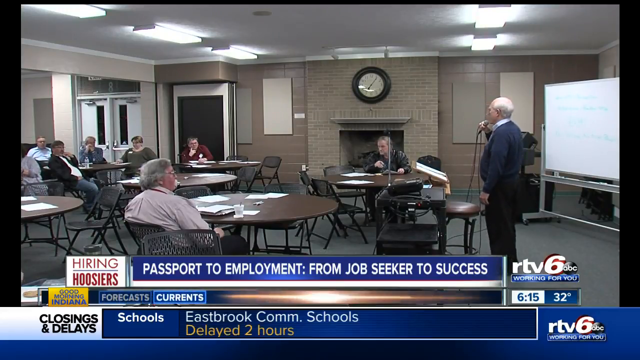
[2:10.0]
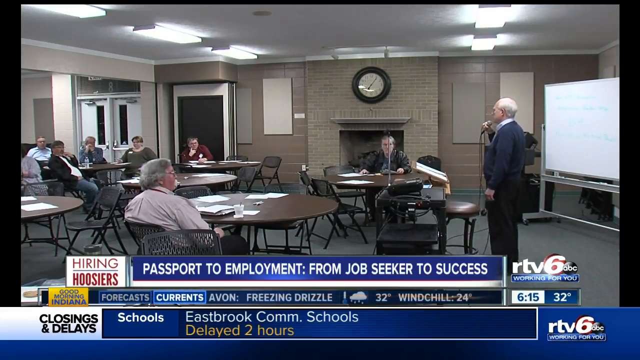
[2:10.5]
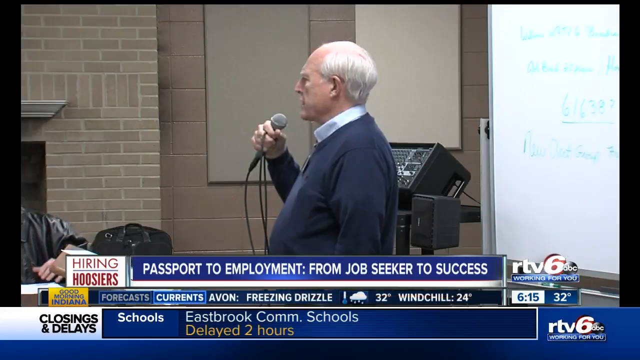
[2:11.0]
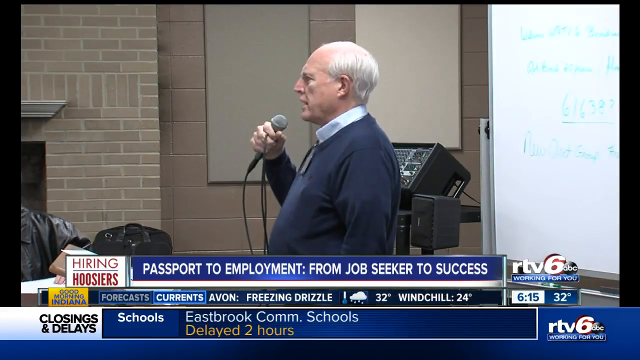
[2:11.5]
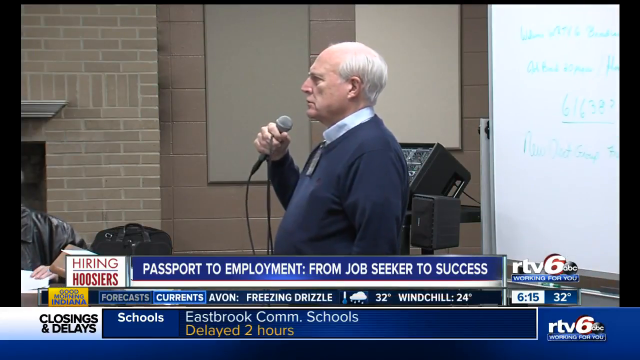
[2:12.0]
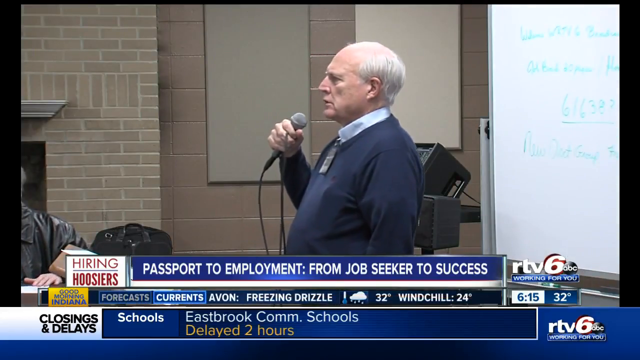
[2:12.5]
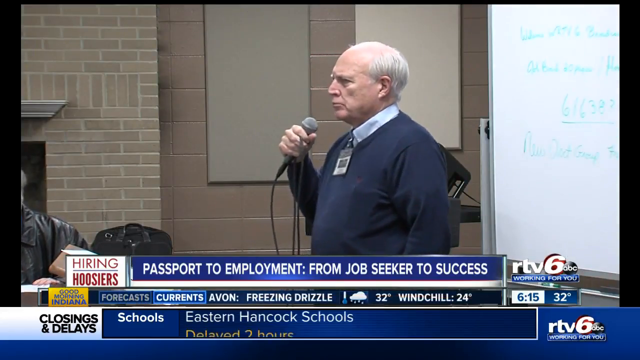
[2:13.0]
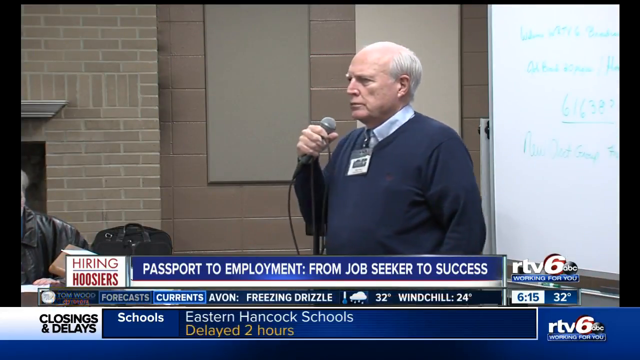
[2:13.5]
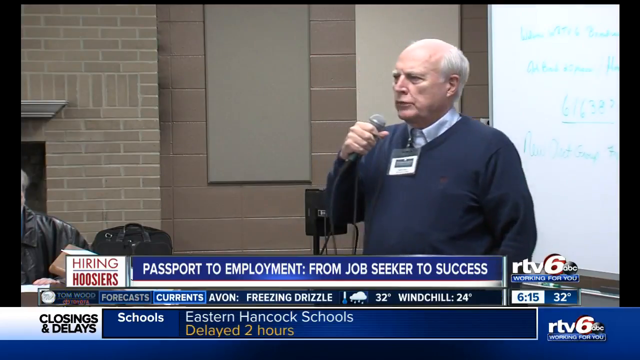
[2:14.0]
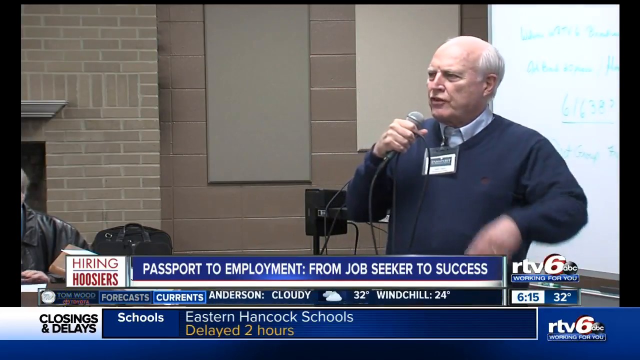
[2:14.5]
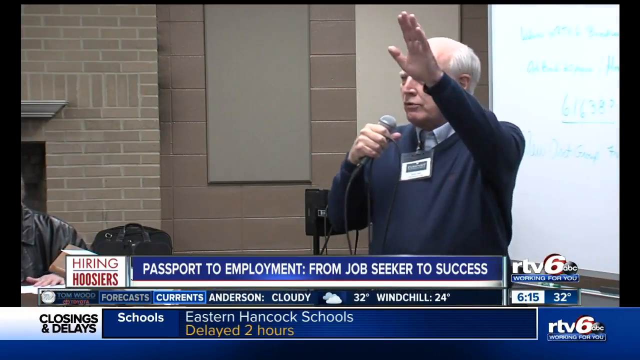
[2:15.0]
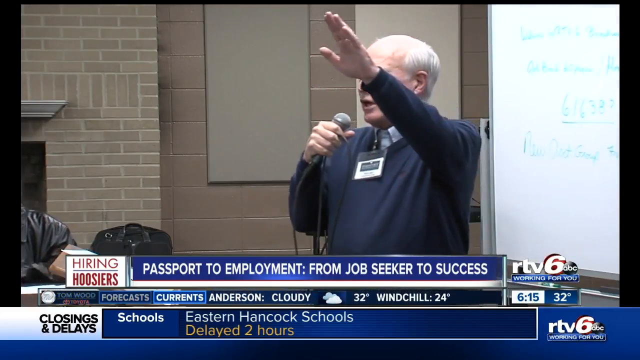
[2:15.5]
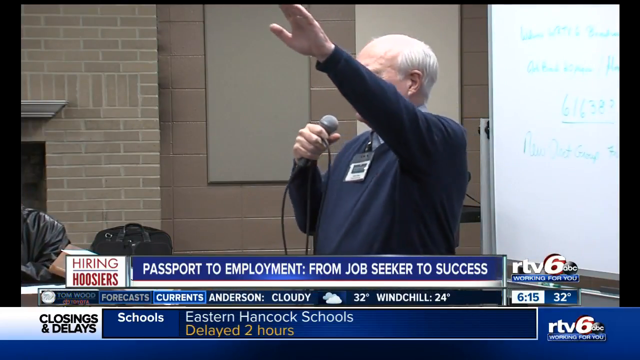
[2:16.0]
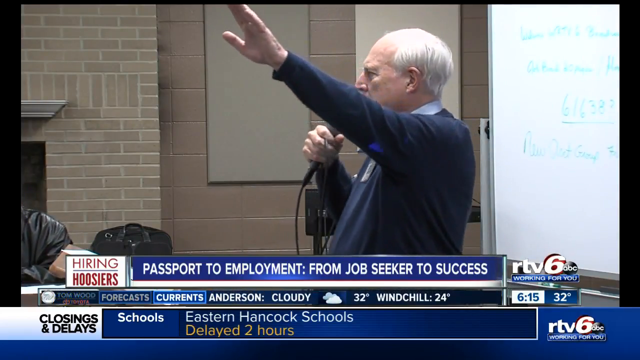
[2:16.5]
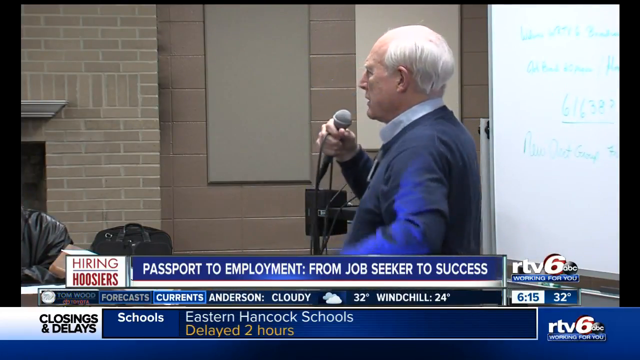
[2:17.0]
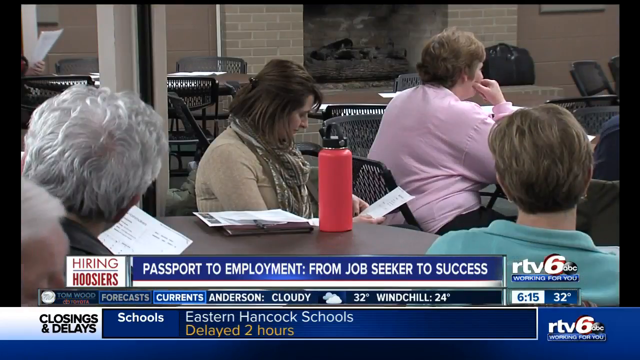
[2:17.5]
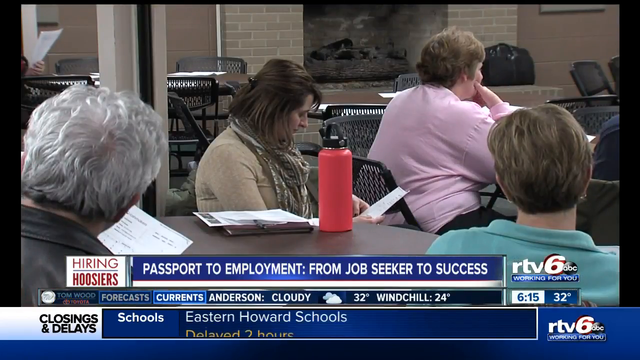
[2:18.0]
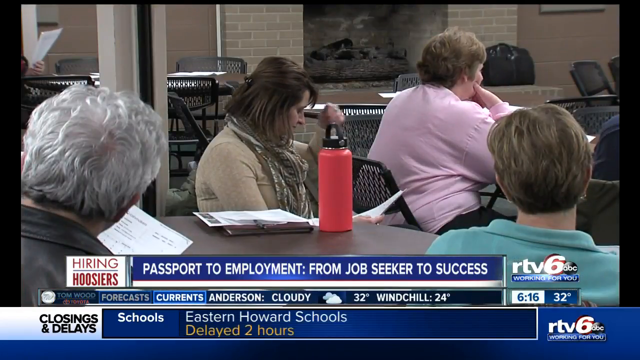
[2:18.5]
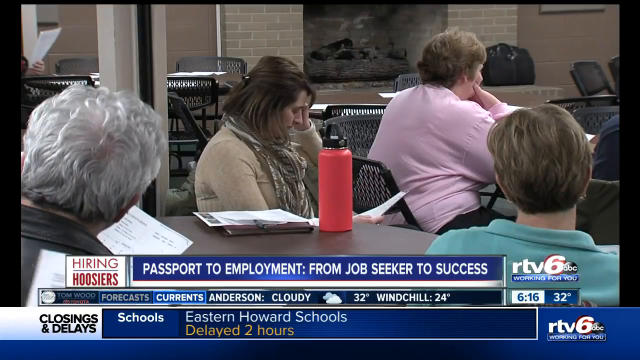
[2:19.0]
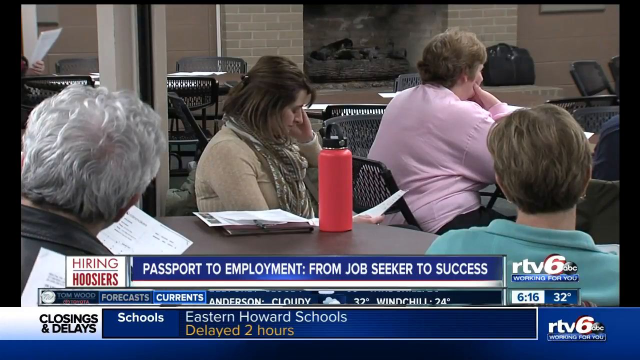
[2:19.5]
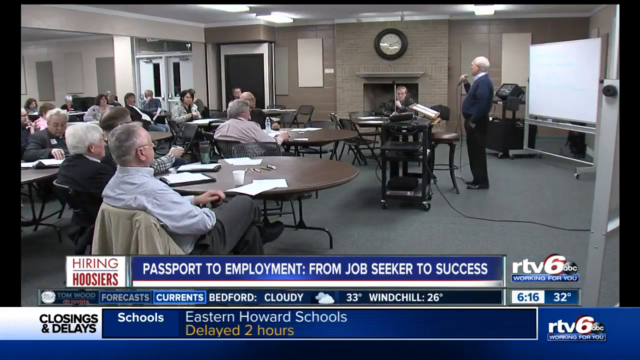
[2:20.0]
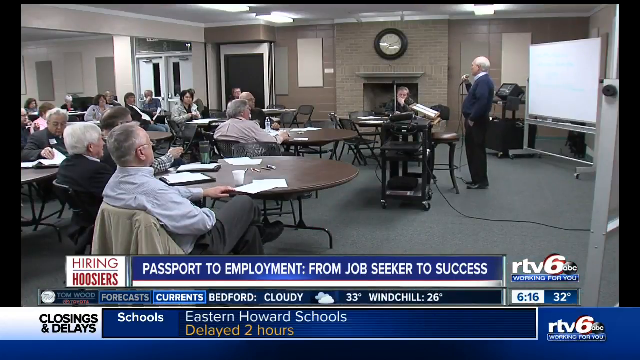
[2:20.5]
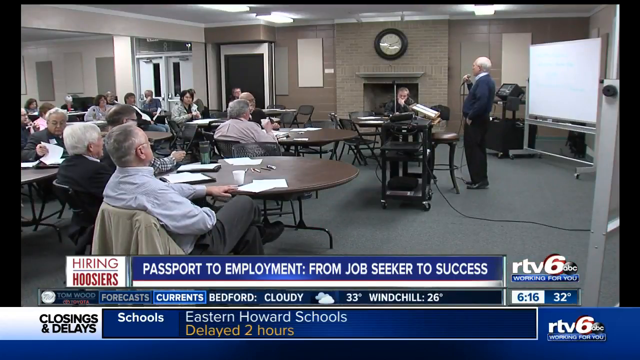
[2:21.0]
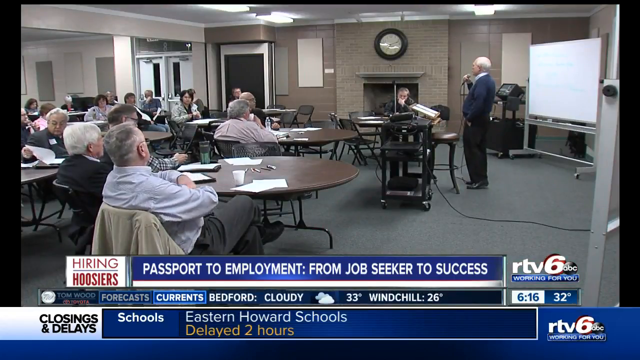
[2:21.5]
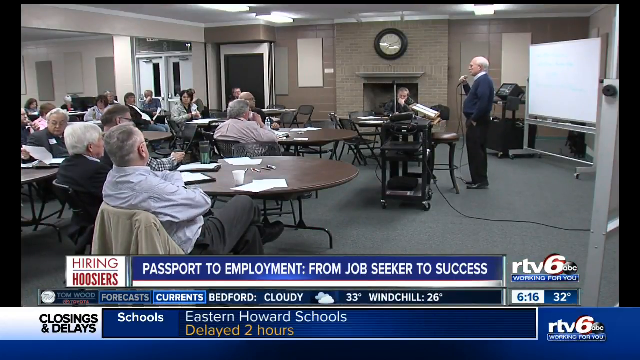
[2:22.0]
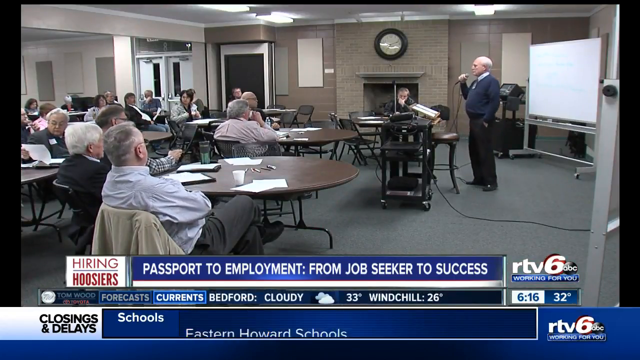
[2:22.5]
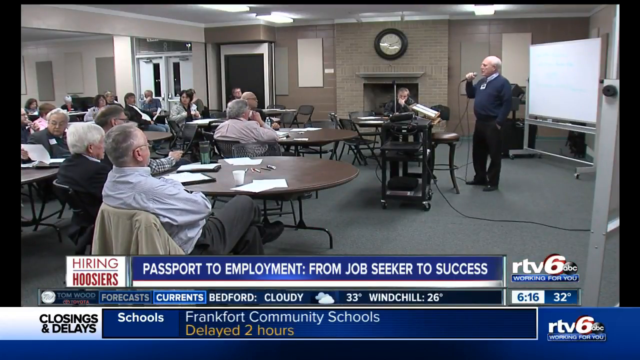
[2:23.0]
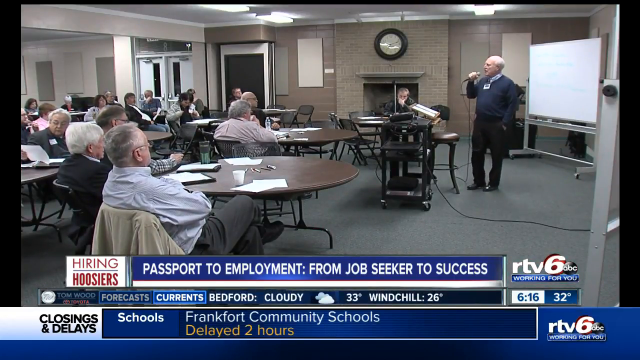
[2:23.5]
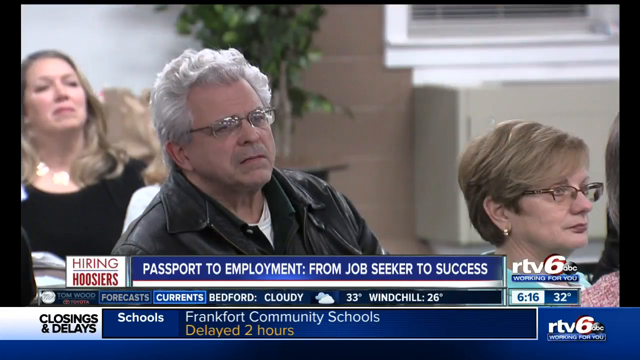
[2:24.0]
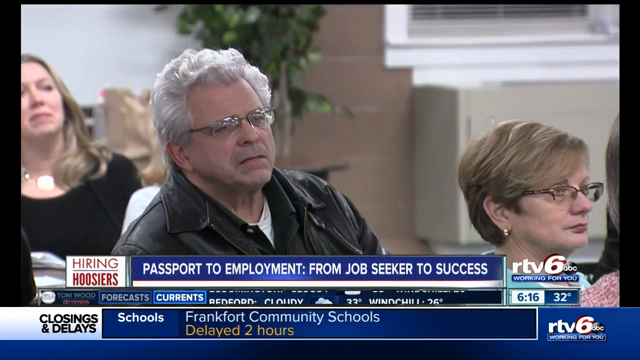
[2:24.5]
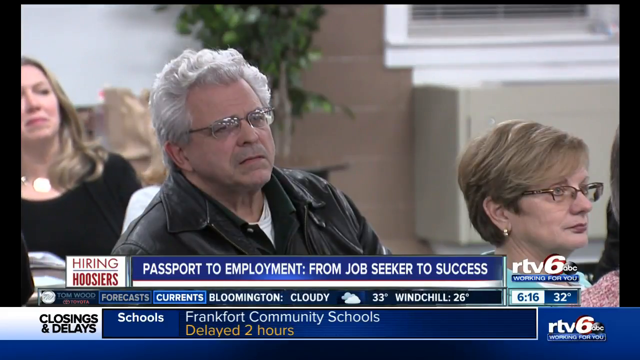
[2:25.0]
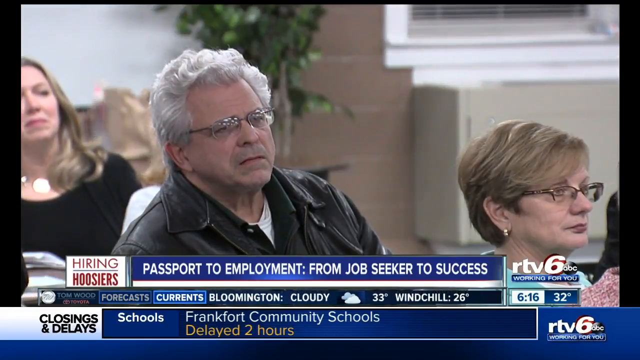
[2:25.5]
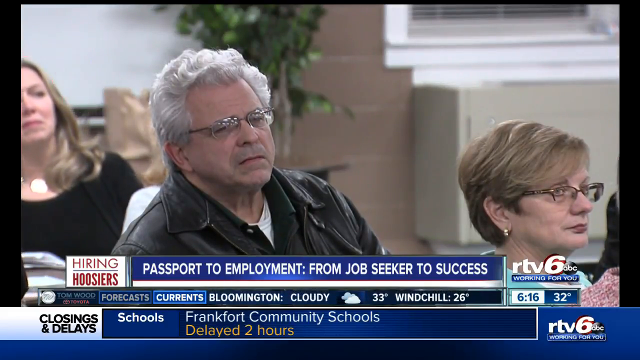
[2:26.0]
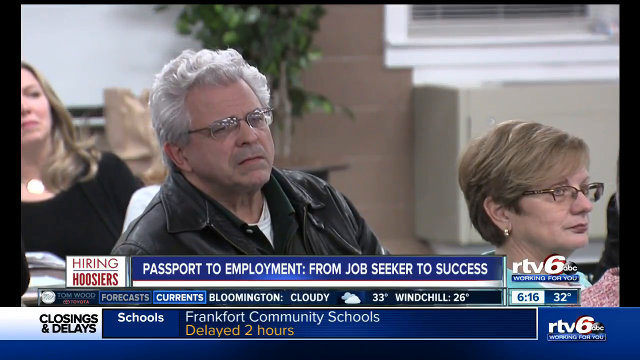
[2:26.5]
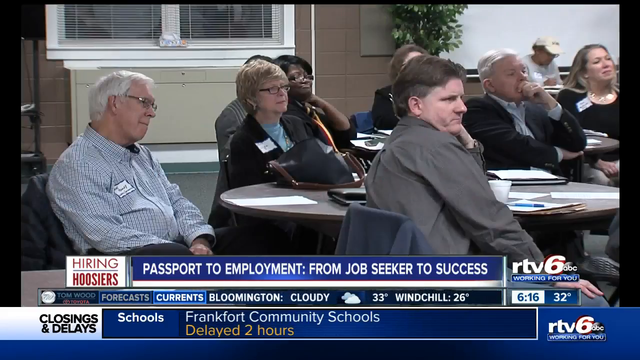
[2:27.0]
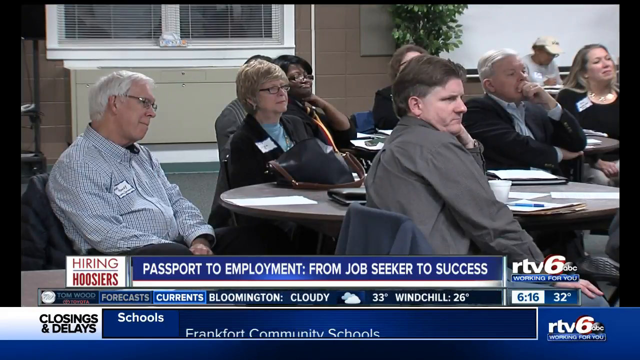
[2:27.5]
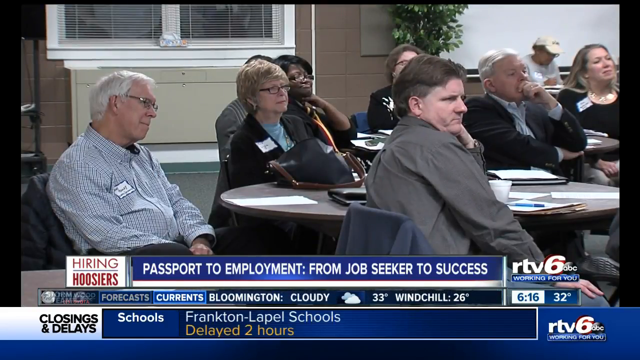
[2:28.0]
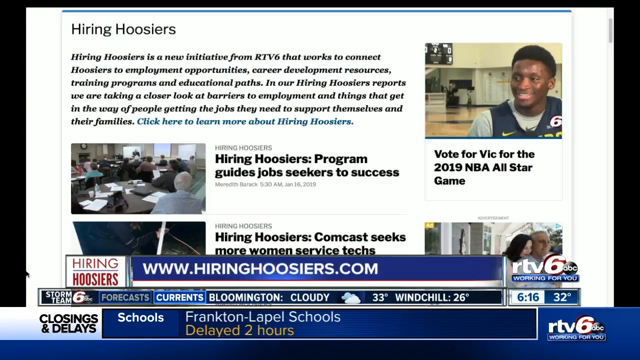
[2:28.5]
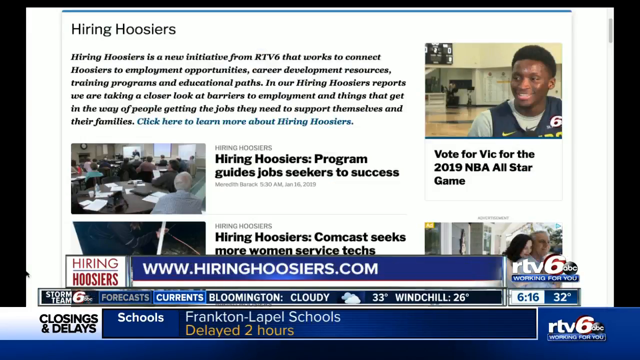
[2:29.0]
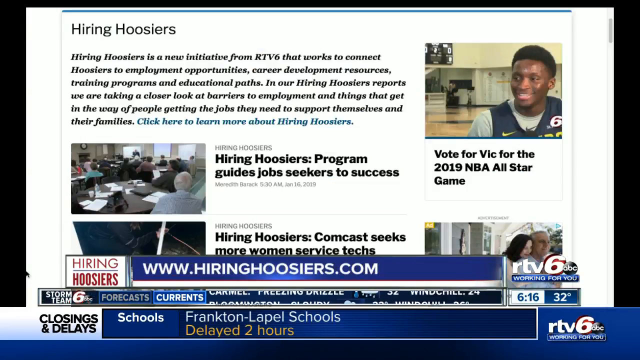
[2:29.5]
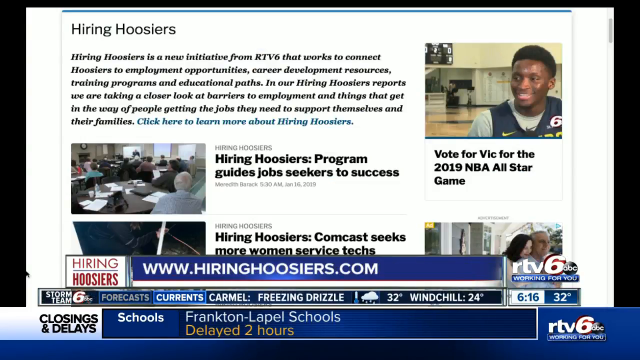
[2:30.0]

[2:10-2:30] In the conference room, many people have left and some tables are totally empty, while a few people remain. The man is still at the front talking into his microphone. The video then switches to a screen reading "Hiring Hoosiers", with text describing it as a new initiative from RTV6, the ABC station, that works to connect Hoosiers to employment opportunity, education or training programs. Text reads "Hiring Hoosiers, Program Guides, Job Seekers to Success", and another headline begins "Hiring Hoosiers, Comcast seeks more women".